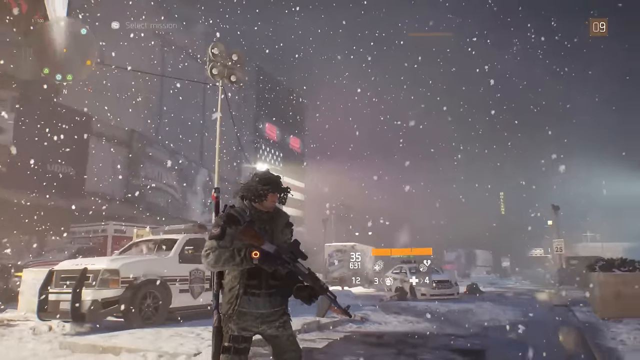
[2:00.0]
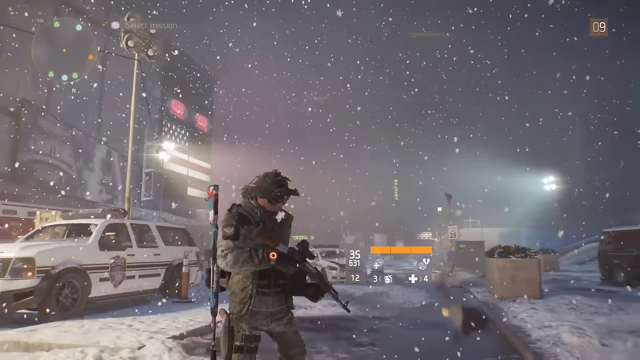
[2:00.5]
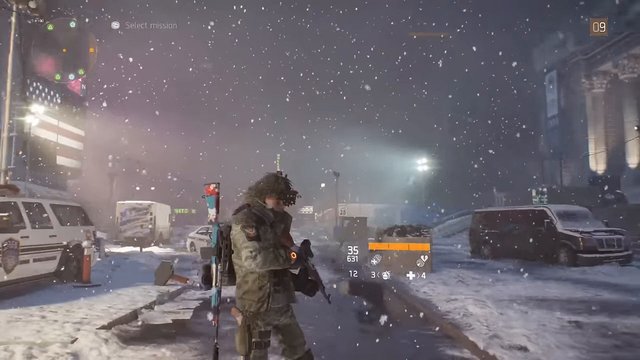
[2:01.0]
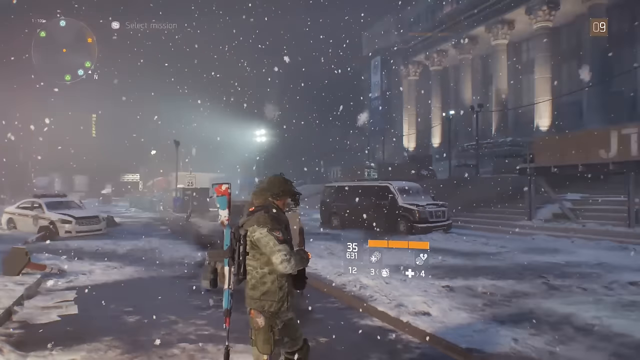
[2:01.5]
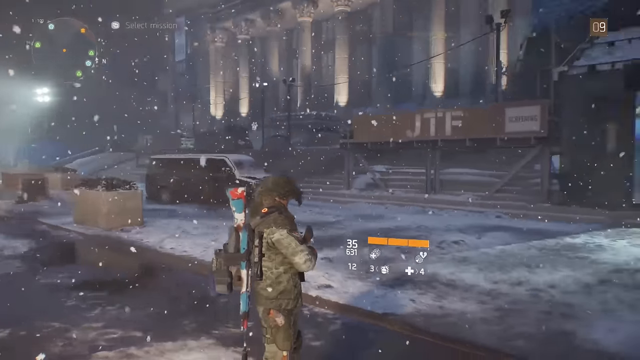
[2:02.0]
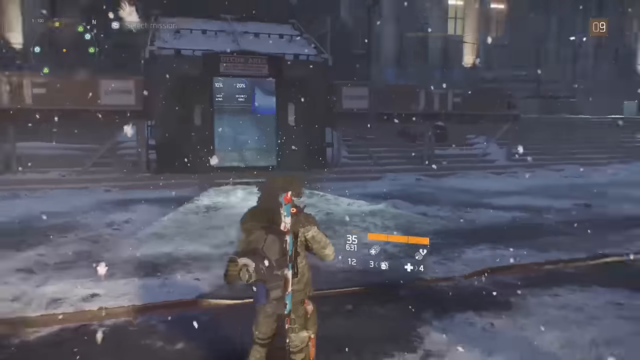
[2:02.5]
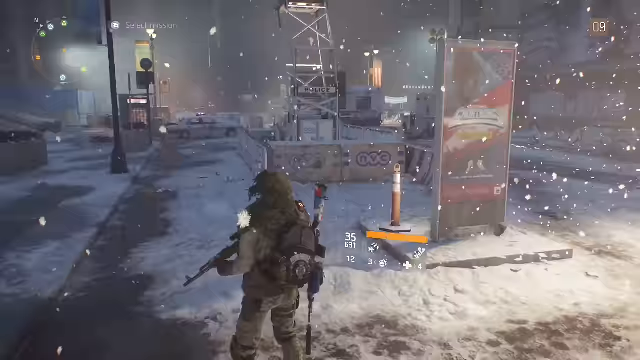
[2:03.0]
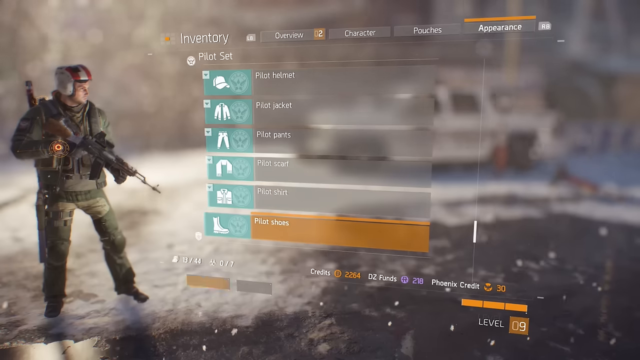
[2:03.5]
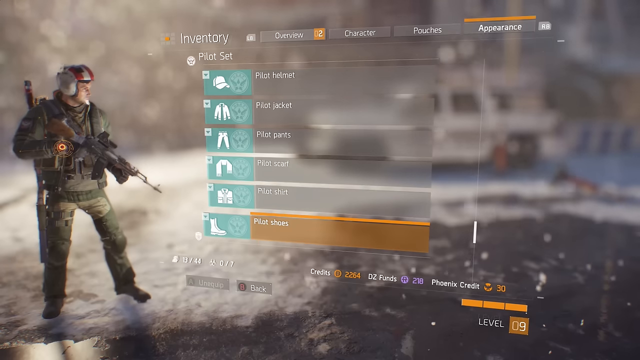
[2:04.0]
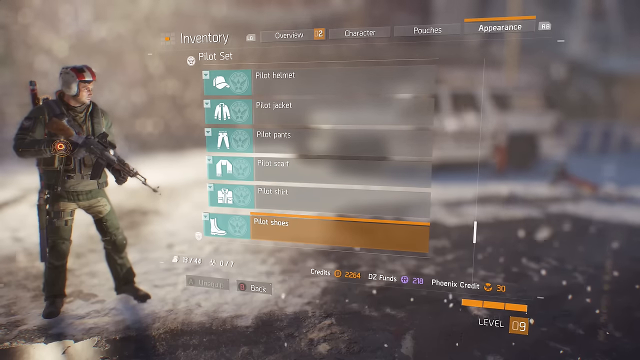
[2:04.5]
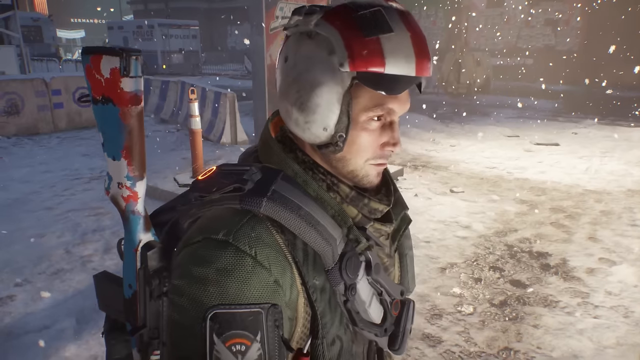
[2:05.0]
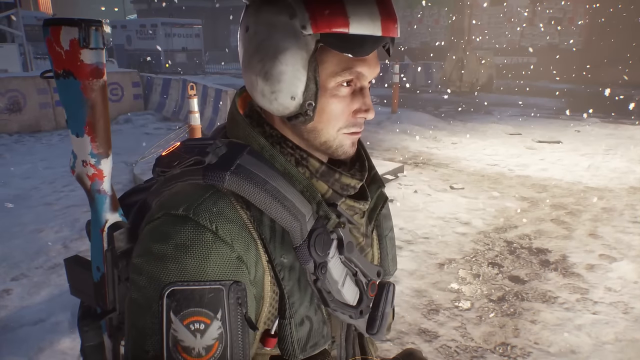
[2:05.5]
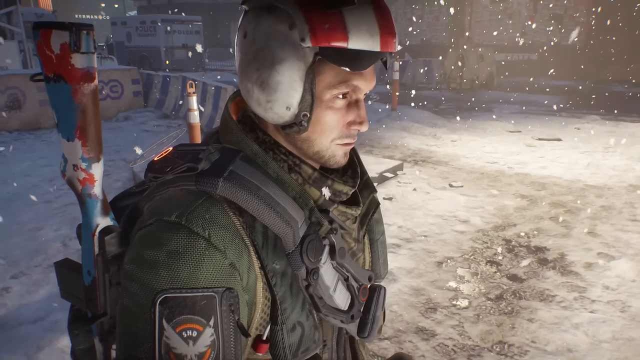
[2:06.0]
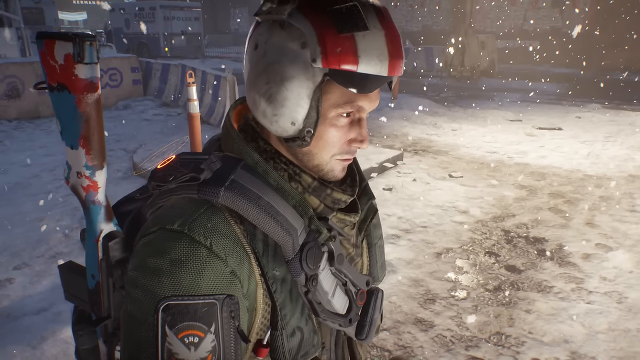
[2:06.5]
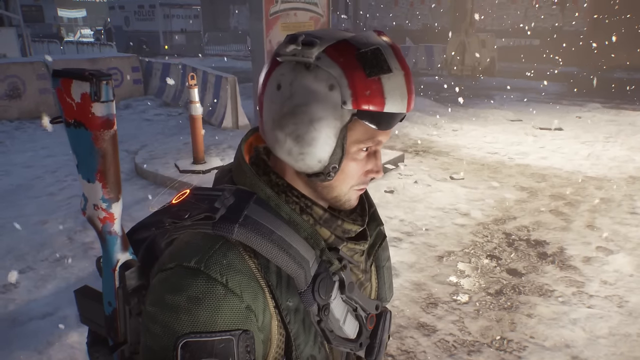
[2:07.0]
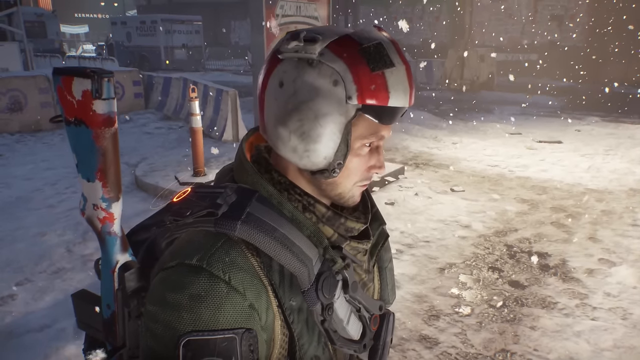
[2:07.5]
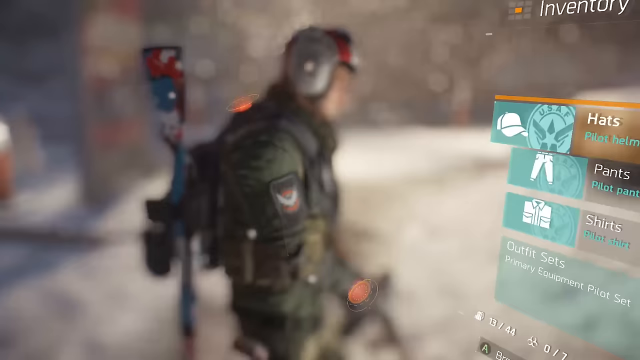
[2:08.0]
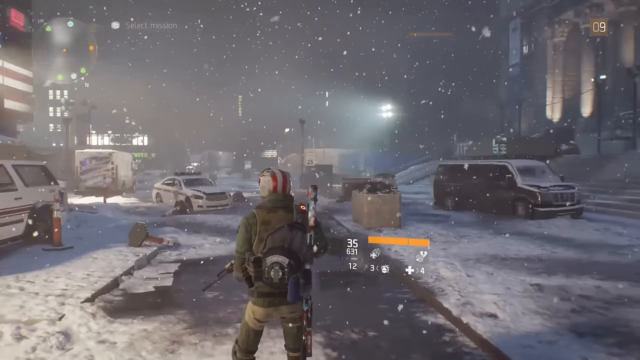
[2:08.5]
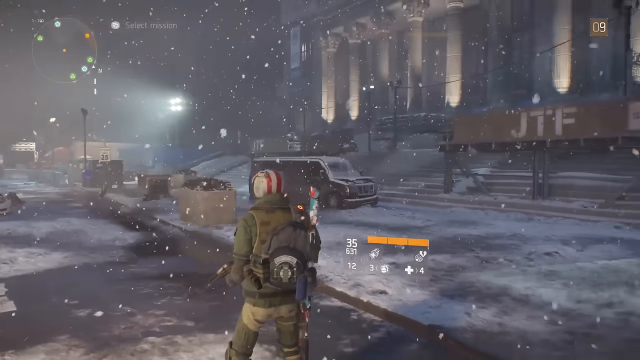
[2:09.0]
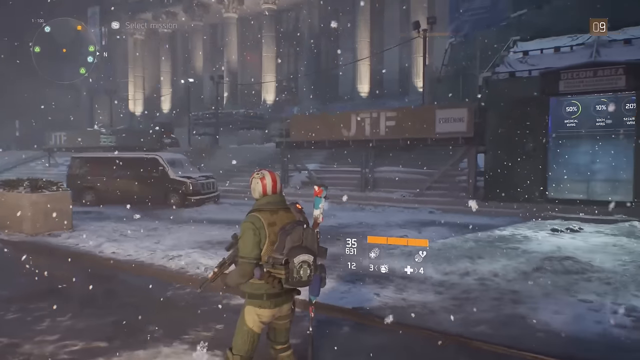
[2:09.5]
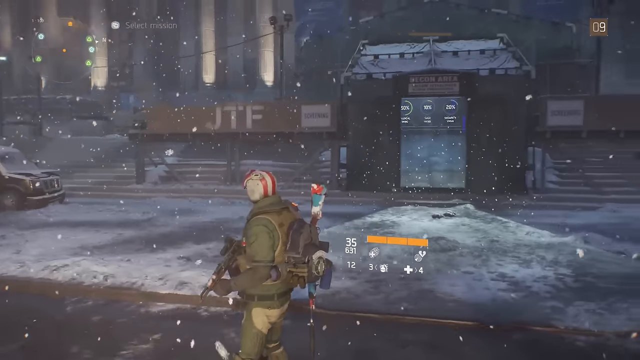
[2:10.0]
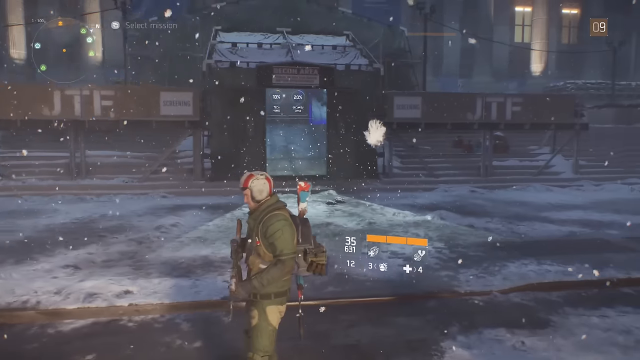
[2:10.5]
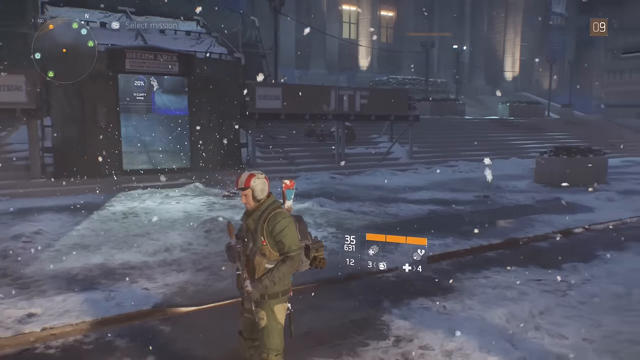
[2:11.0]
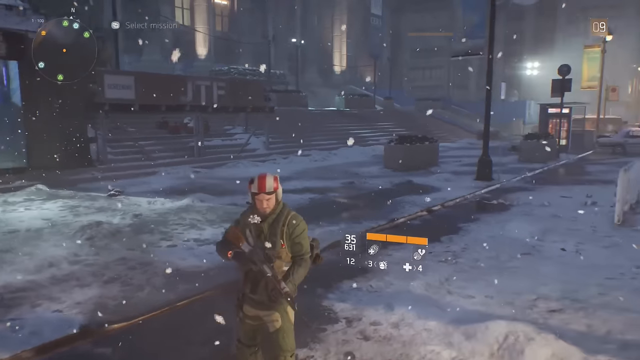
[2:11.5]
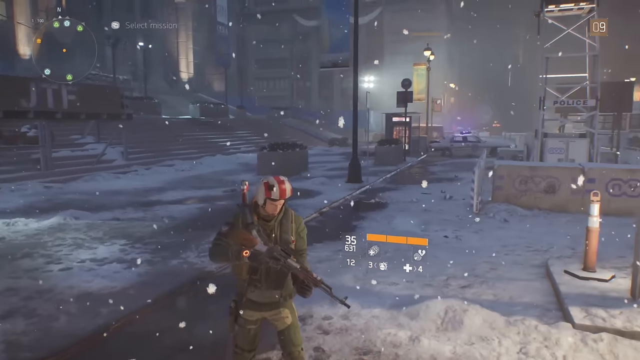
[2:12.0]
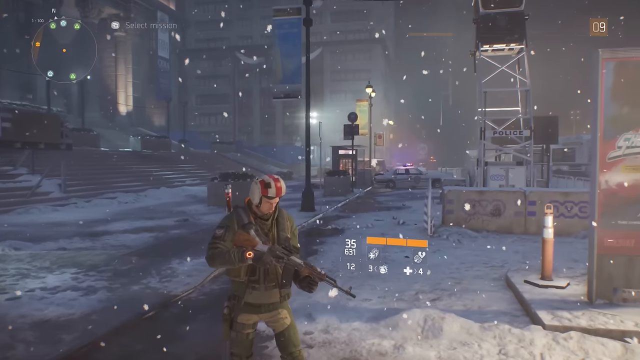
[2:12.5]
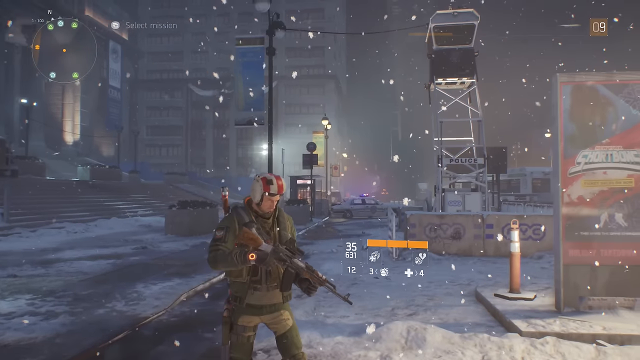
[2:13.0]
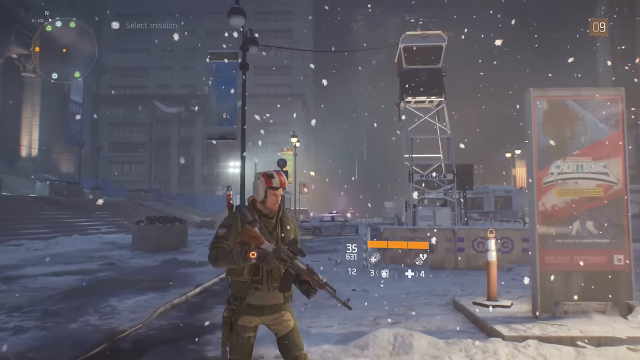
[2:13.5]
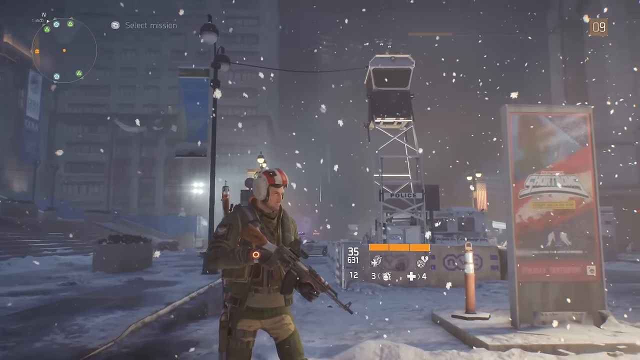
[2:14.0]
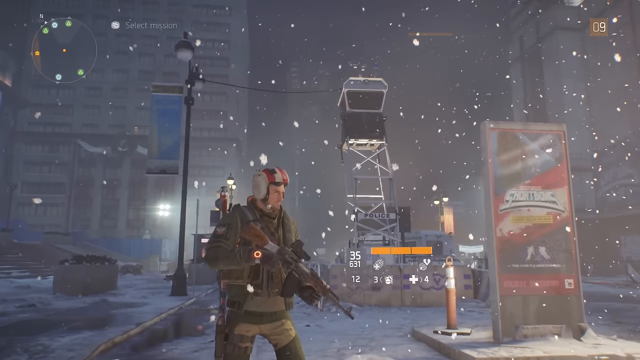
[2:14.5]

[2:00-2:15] The character wears a hat or helmet as the camera pans around his right side and then his back. Everything goes to a menu that says "Pilot Set," "Pilot Helmet," "Pilot Jacket," "Pilot Pants," "Pilot Scarf," "Pilot Shirt" and "Pilot Shoes," with "Pilot Shoes" highlighted in orange. The character is to the left of the menu. The character is now wearing a white and red pilot's helmet, a solid dark green jacket and a green and black plaid scarf. He still has a gray strap crossing his chest from his right shoulder to his left hip, and still has a red, teal, white and black gun behind his right shoulder. His face is seen briefly, and then the camera pans around him. The helmet is white with red stripes going from front to back. His pants are green, but it looks as if he is wearing darker green chaps.